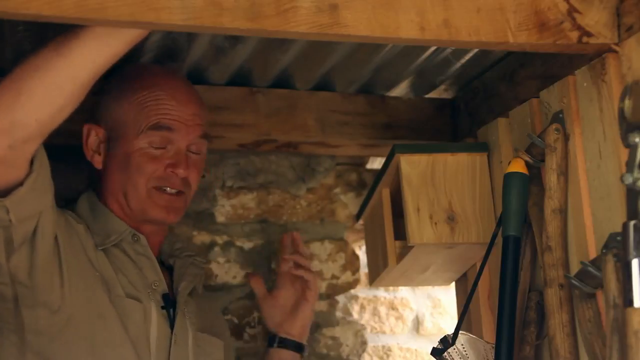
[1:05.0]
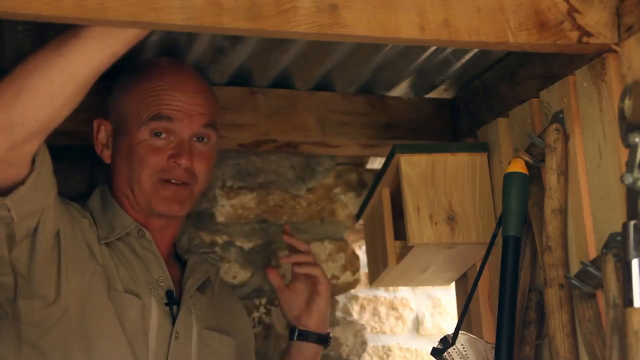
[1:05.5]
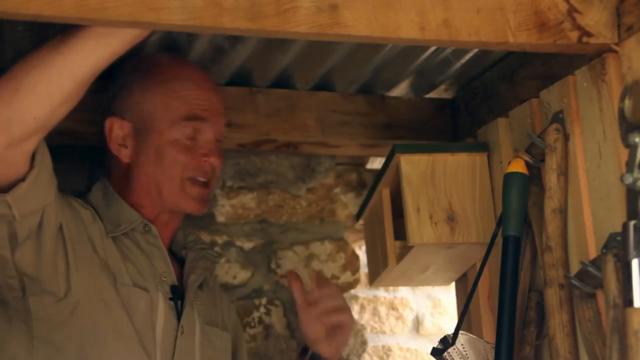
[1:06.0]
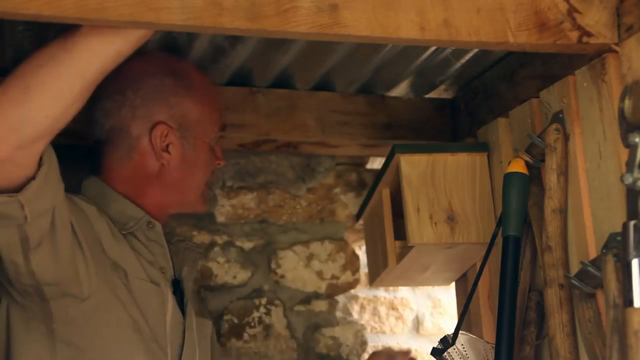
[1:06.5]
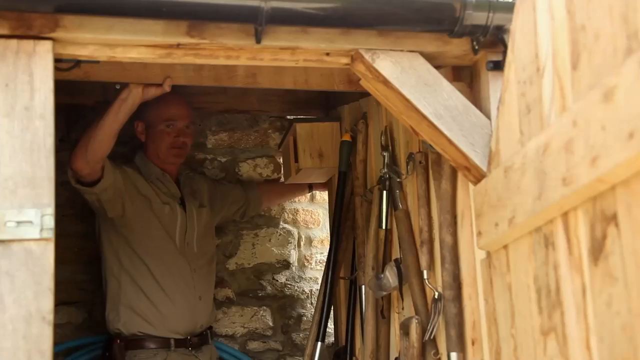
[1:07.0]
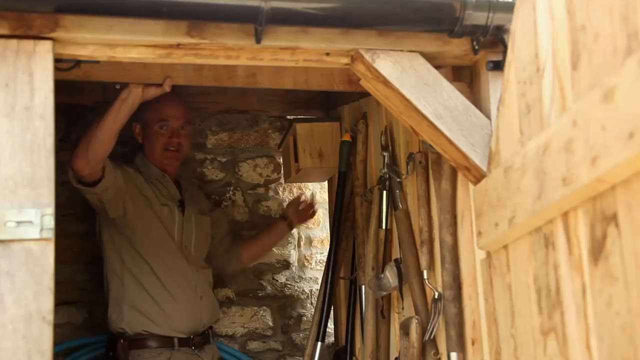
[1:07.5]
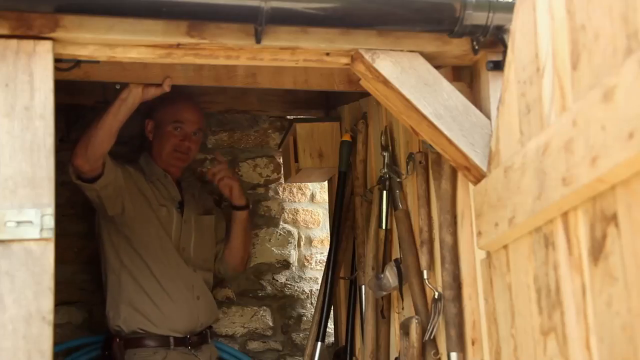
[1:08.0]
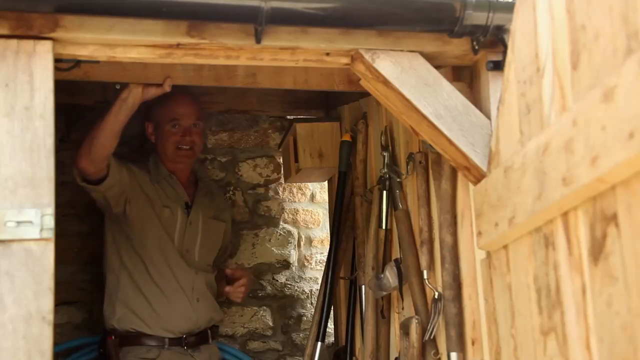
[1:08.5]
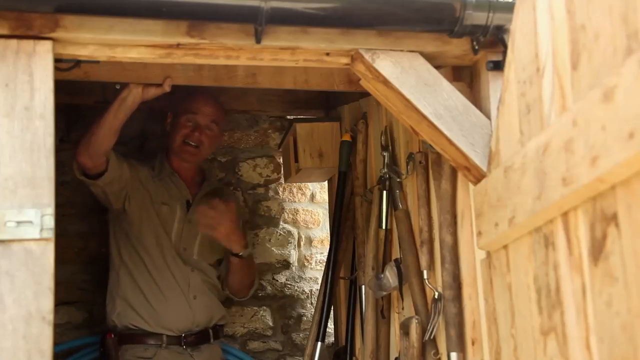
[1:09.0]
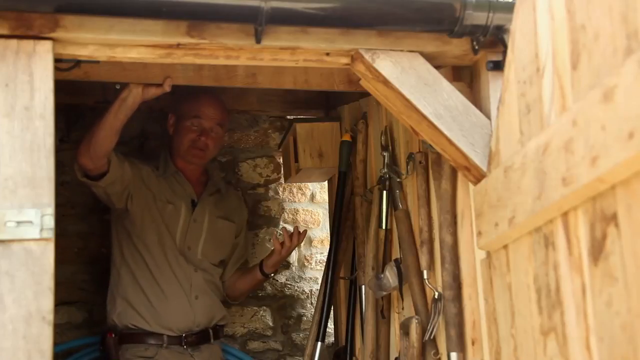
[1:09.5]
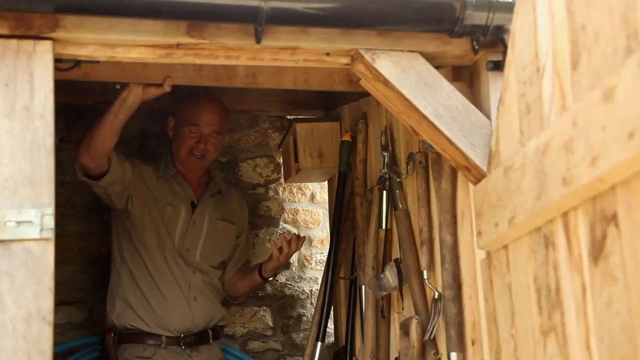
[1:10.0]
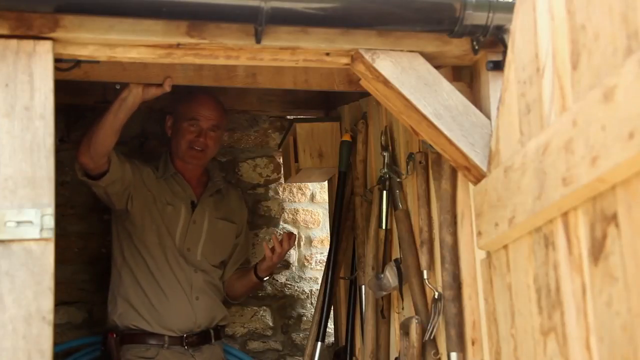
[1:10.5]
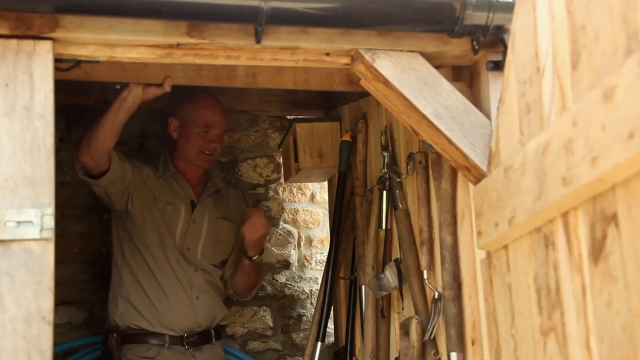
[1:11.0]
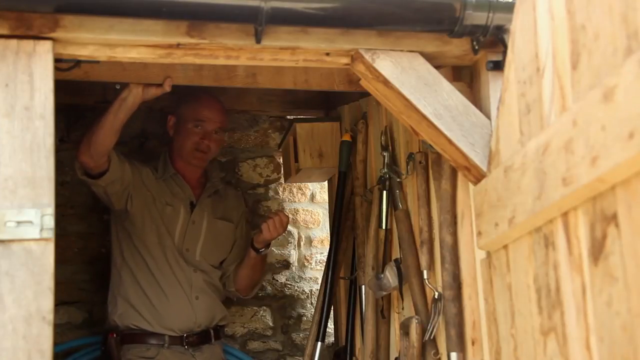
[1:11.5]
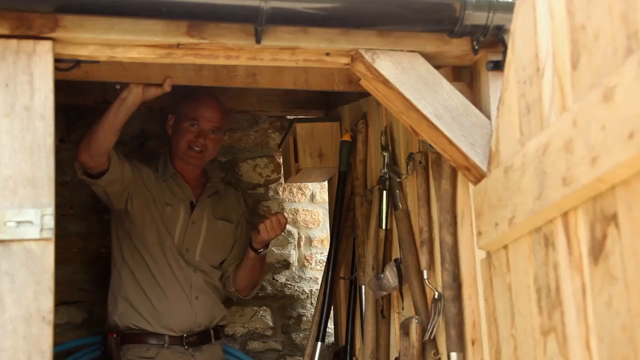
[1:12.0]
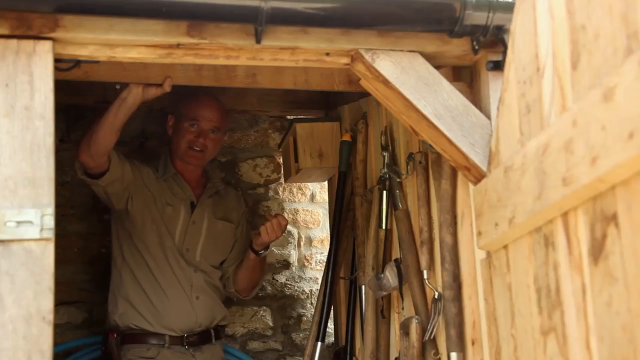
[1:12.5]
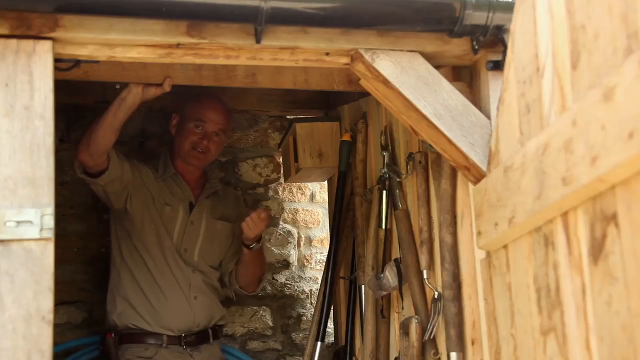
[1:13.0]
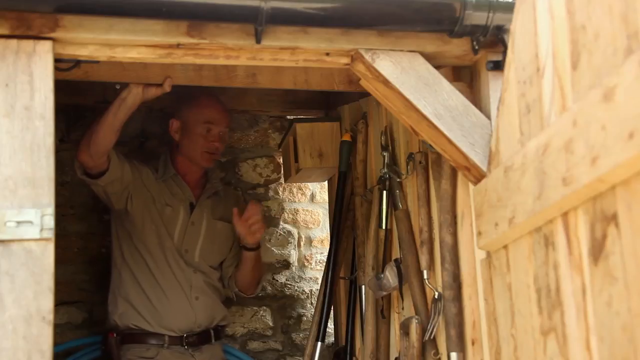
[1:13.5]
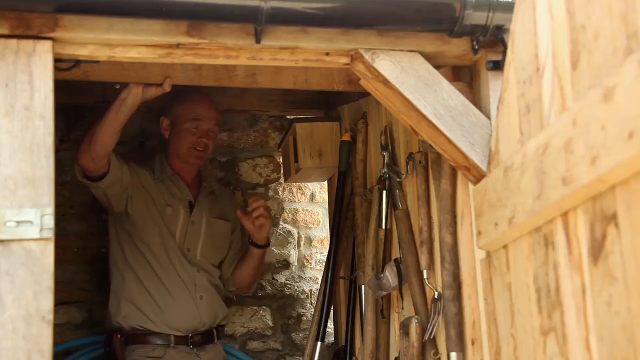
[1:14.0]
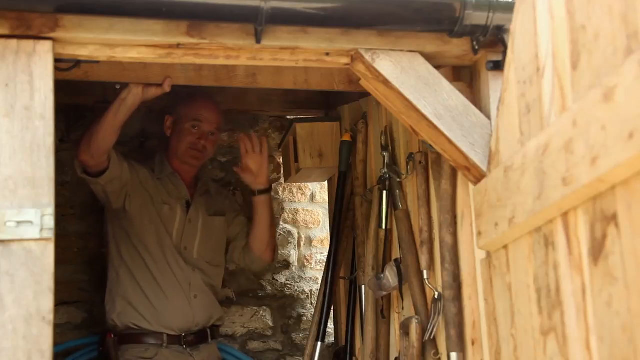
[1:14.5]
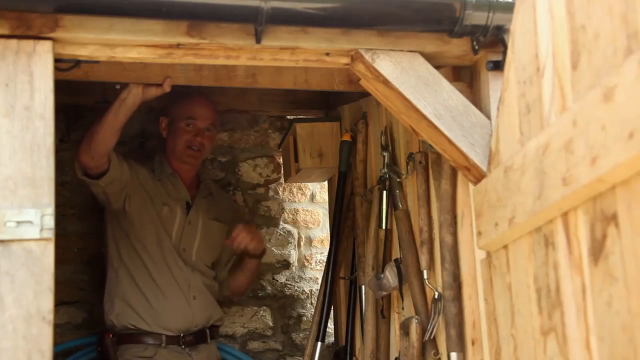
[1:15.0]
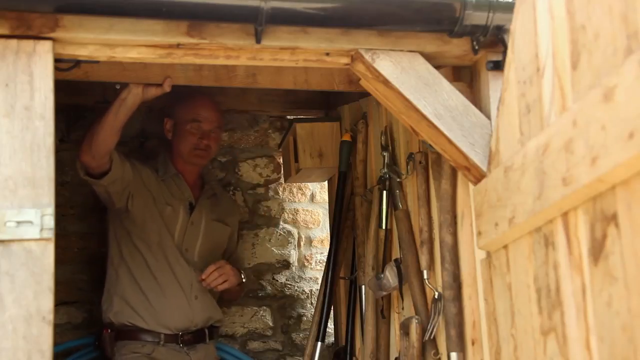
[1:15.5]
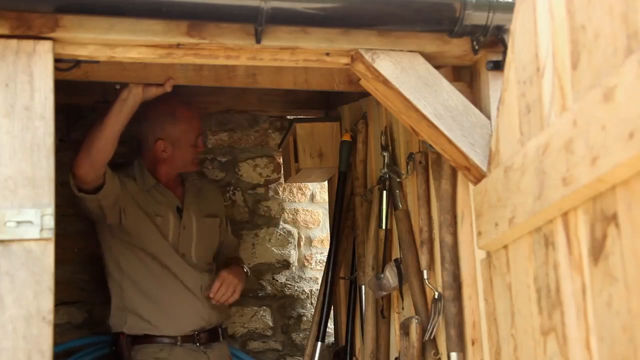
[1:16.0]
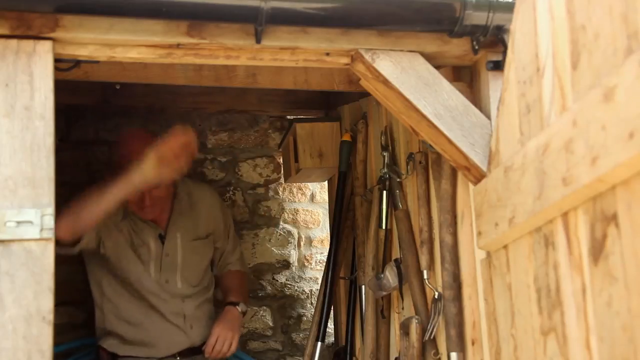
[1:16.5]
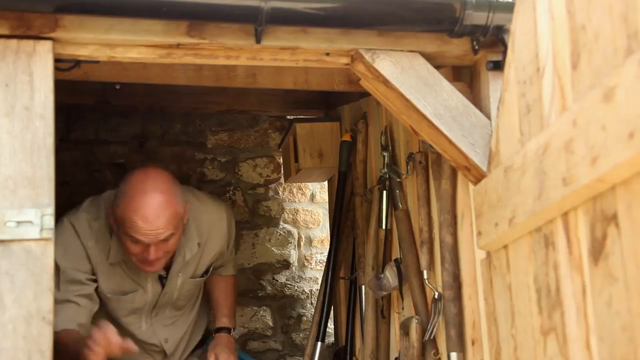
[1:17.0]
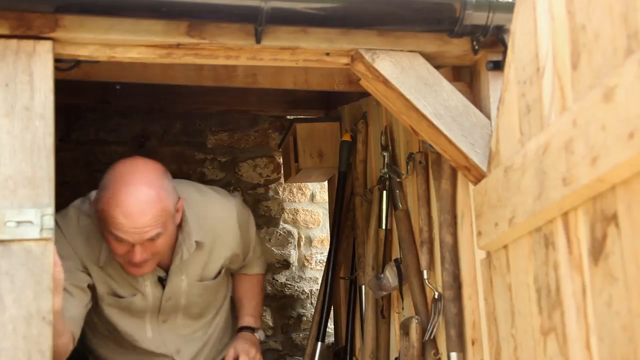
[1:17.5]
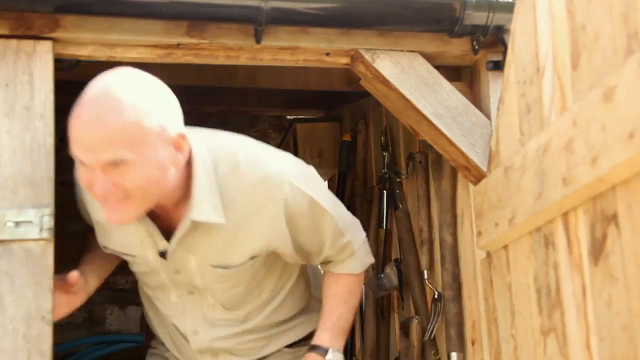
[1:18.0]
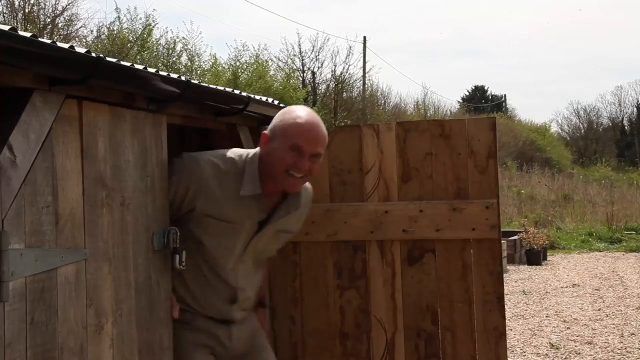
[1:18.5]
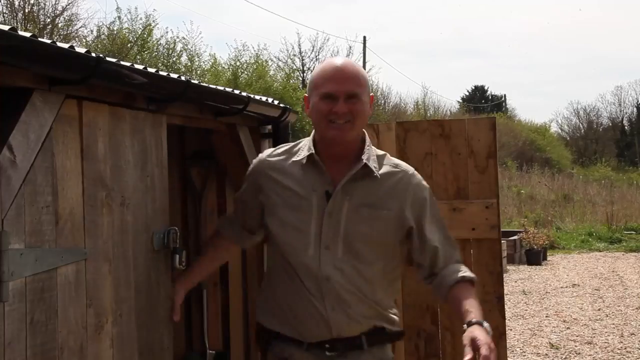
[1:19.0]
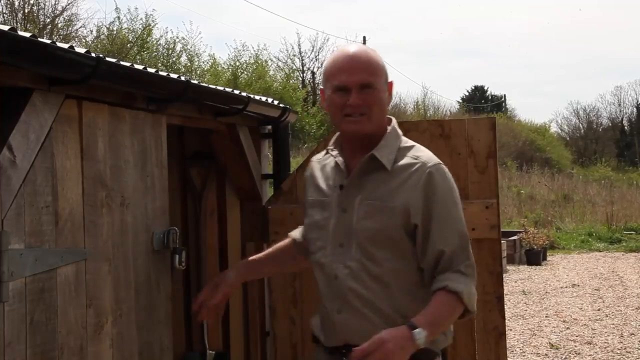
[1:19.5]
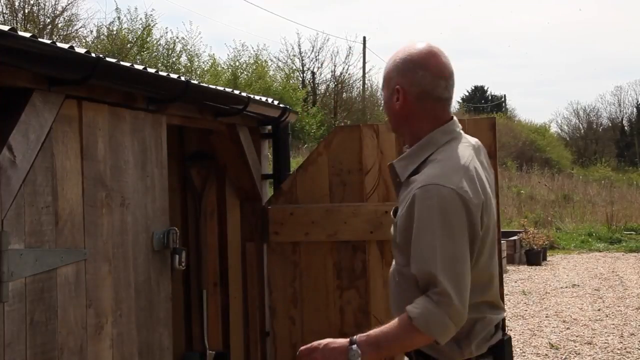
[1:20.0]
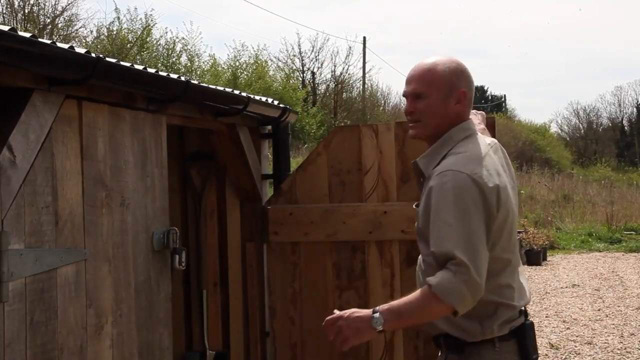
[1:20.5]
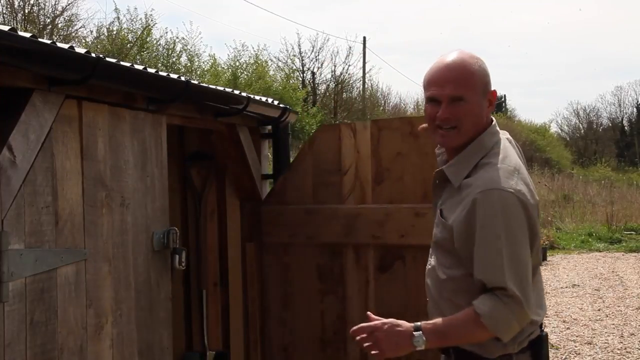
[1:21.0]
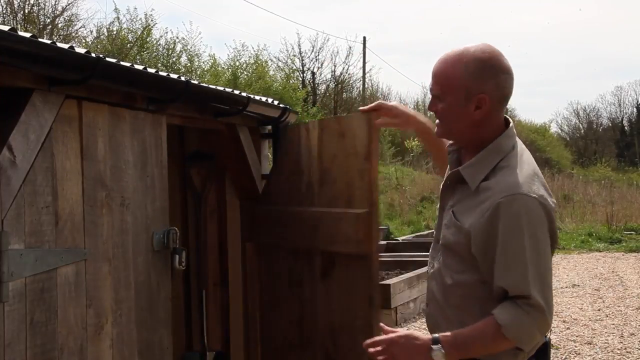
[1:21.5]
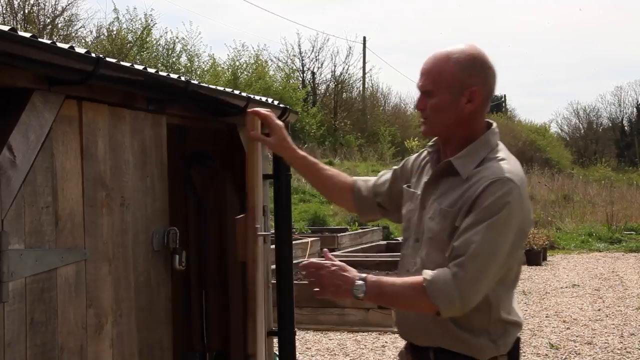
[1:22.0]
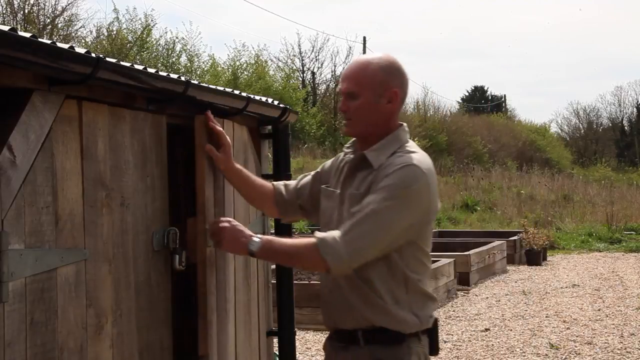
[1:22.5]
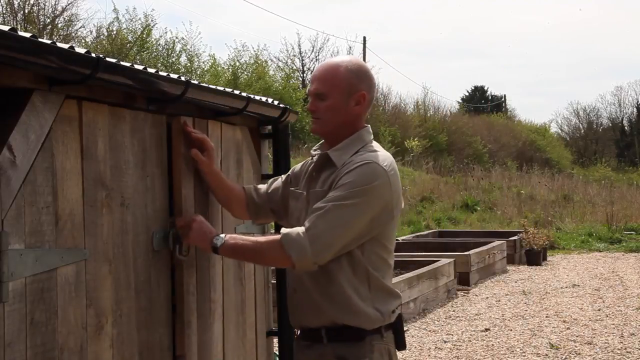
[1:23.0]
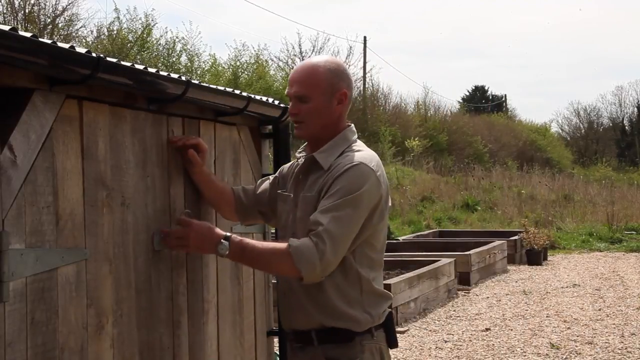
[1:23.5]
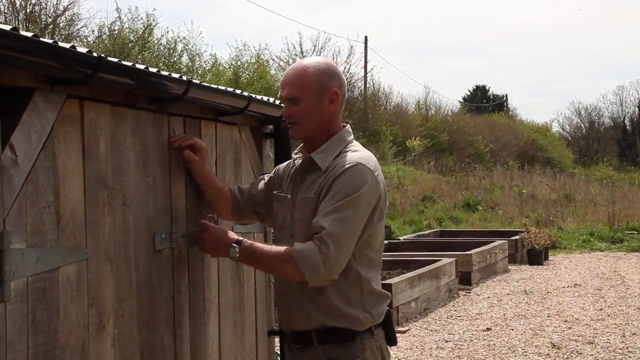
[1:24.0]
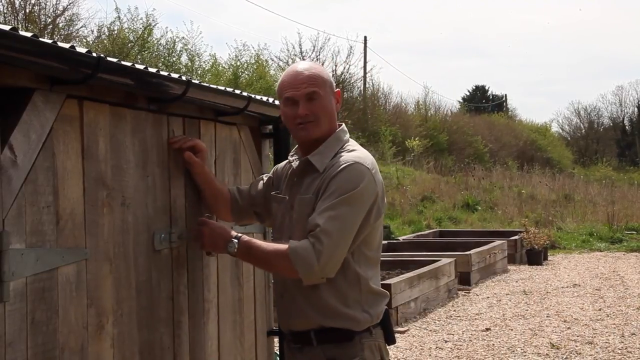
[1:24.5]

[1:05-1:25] The man is in a wooden building, talking after placing the box at a corner of the wooden house. The wooden house is yellow, and some tools hang on the wall. It is a very small house with a very short door. The man seems very passionate about his woodwork and the wooden box. He comes out and locks the door. Outside the house there is grass, and a brick wall is behind the wooden house.